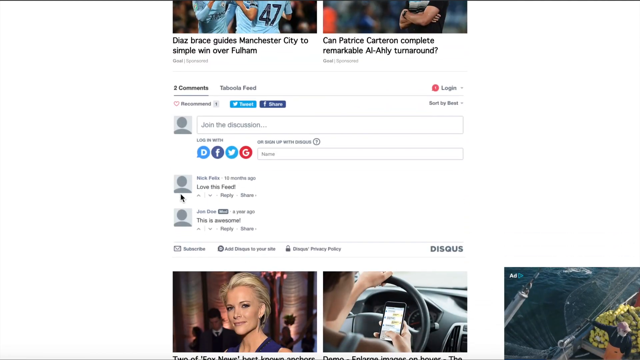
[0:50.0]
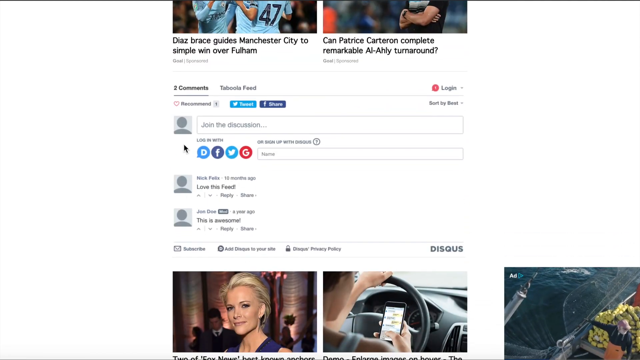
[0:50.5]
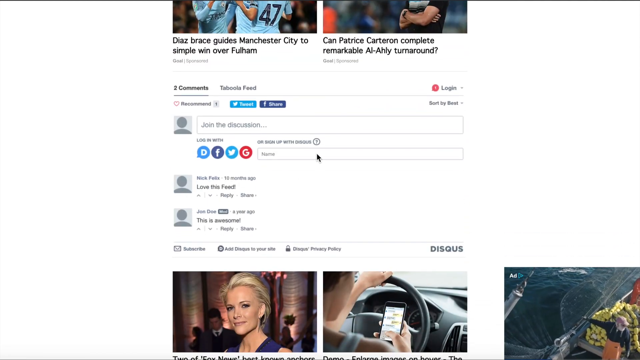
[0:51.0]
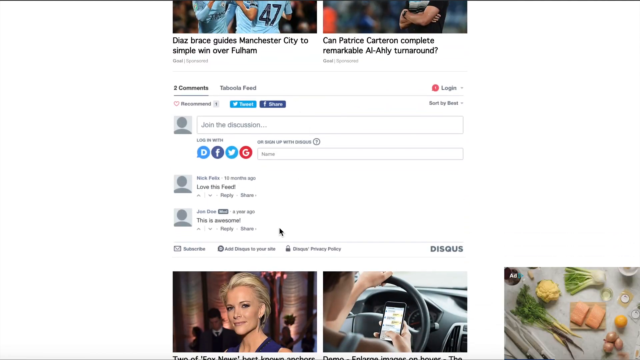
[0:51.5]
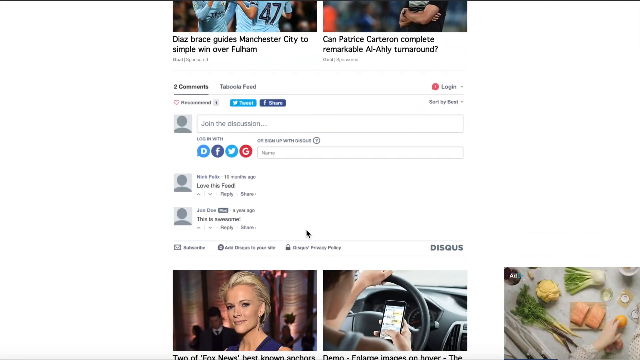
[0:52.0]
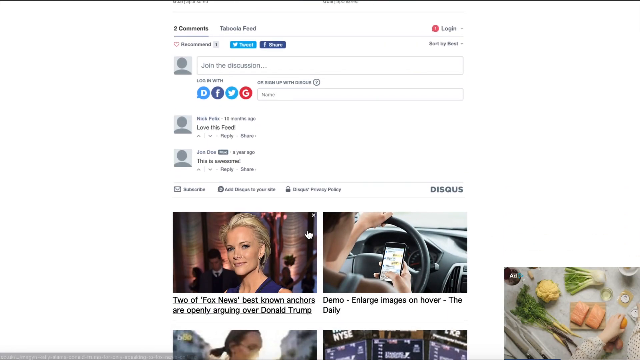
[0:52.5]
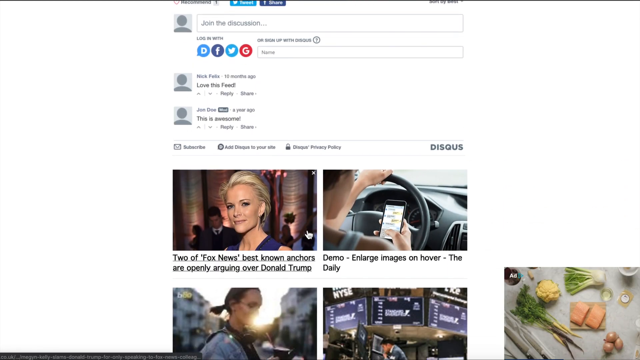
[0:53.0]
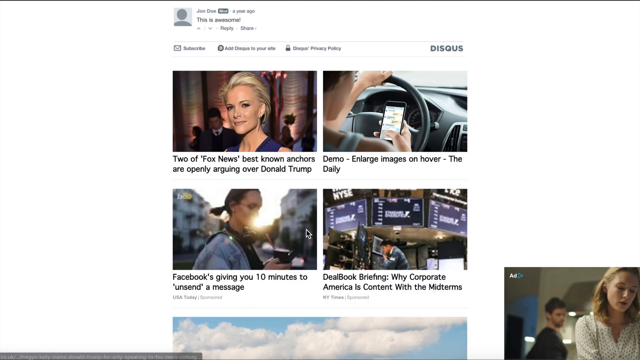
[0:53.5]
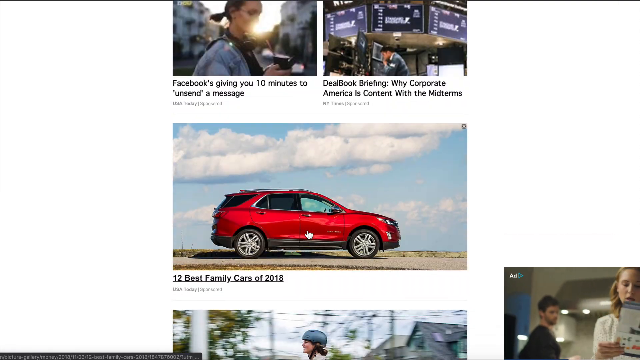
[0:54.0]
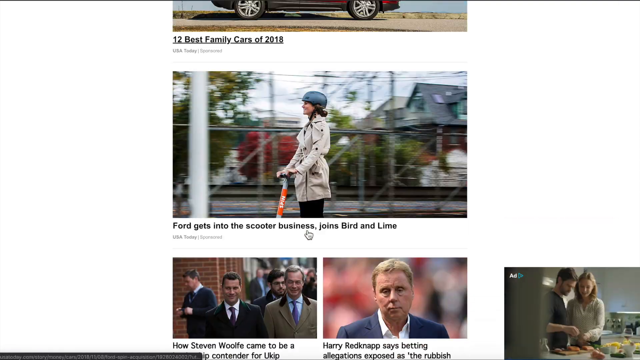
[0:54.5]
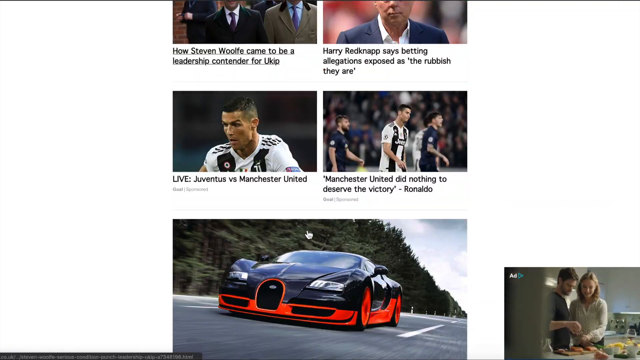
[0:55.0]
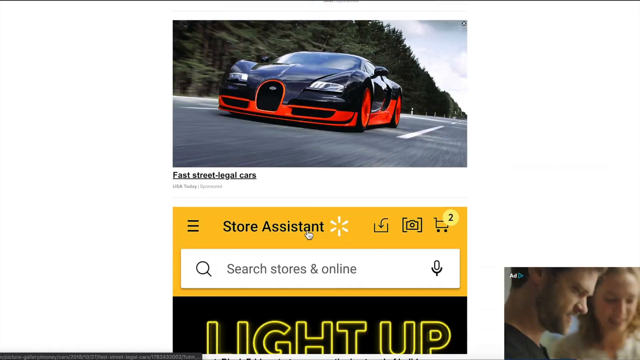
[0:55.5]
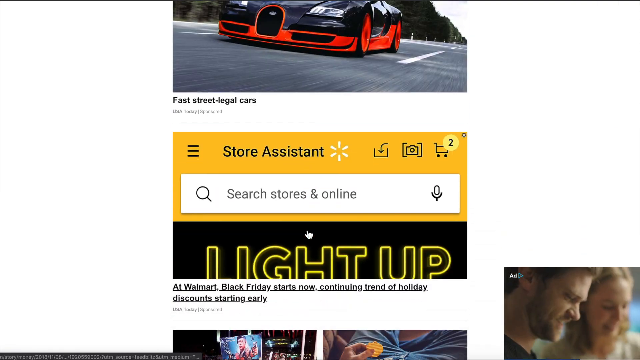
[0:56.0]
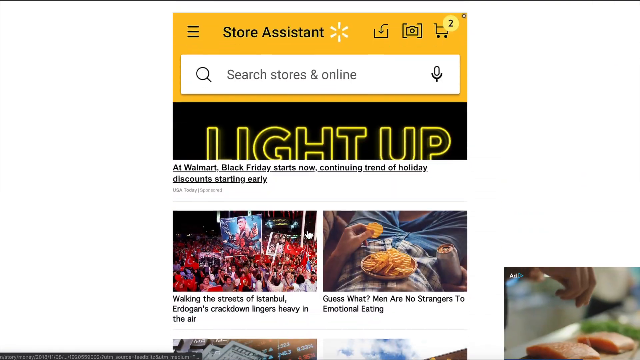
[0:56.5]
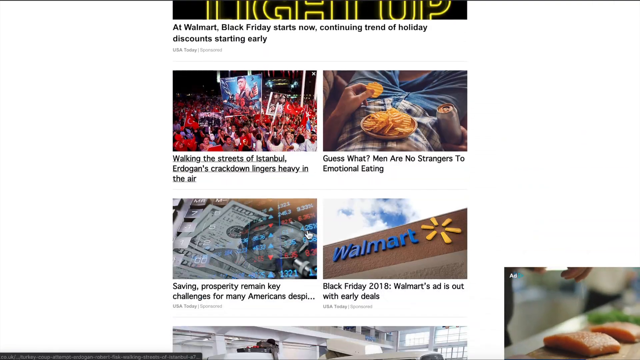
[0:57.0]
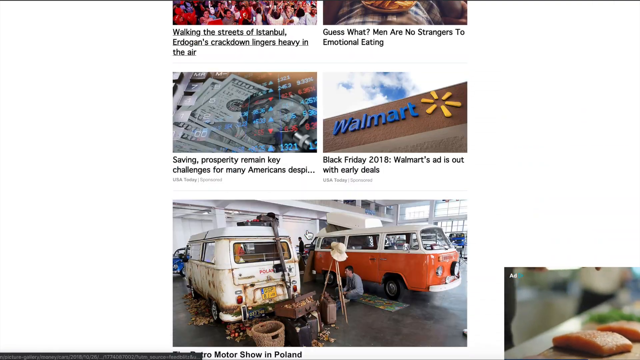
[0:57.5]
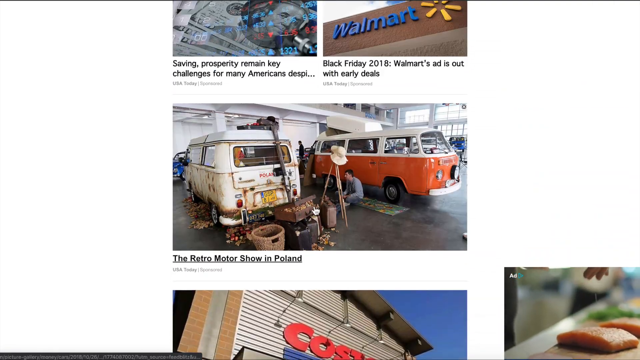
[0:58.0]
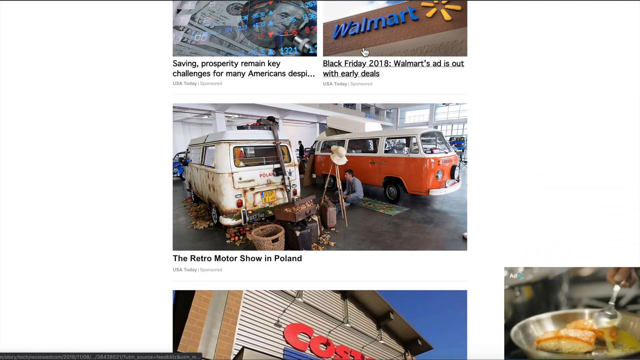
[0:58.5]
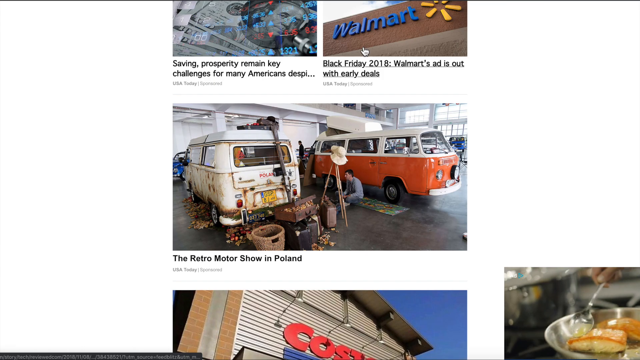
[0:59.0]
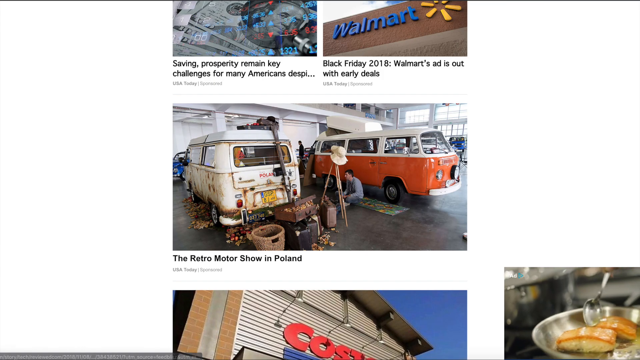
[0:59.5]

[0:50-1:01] Below the article is a section of more clickbait articles, mainly about European football. Then comes a small Disqus comment section with two generic comments. Below the comment section are more clickbait articles about cars, politics and European football, including Juventus, Manchester United and Ronaldo, followed by even more articles about Walmart and Black Friday, with headlines such as "guess what men are no strangers to emotional eating", "Black Friday 2018 Walmart's ad is out with early deals" and "12 best family cars of 2018".